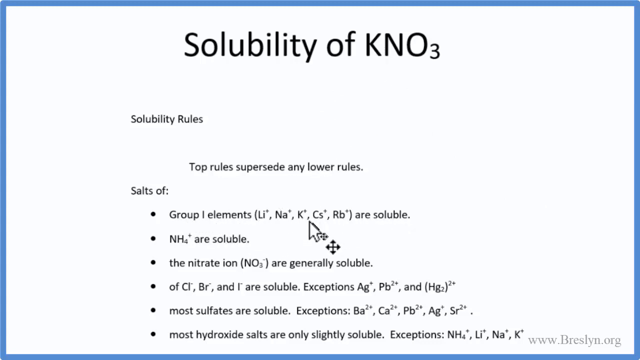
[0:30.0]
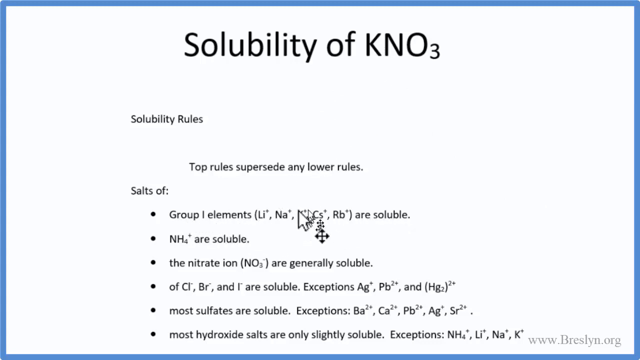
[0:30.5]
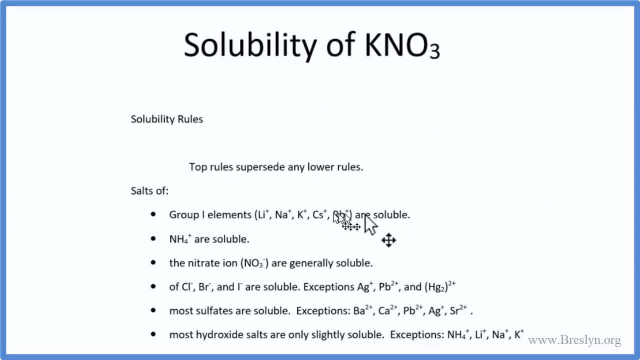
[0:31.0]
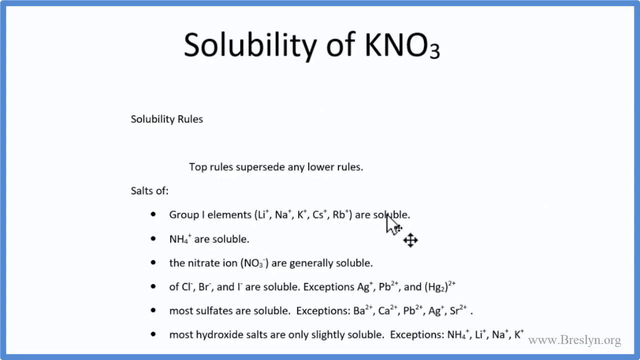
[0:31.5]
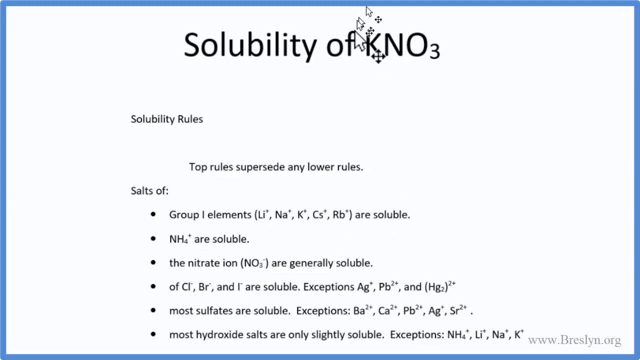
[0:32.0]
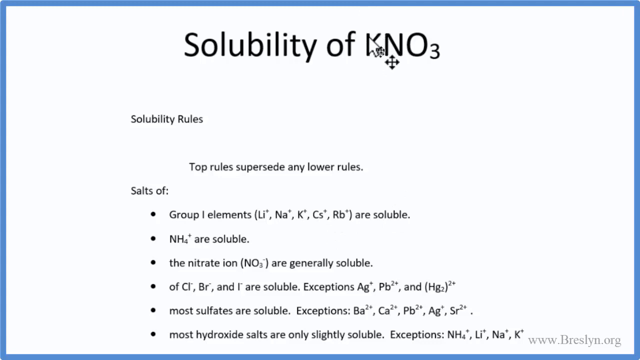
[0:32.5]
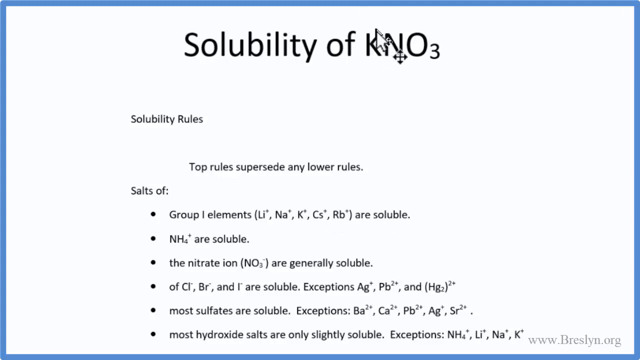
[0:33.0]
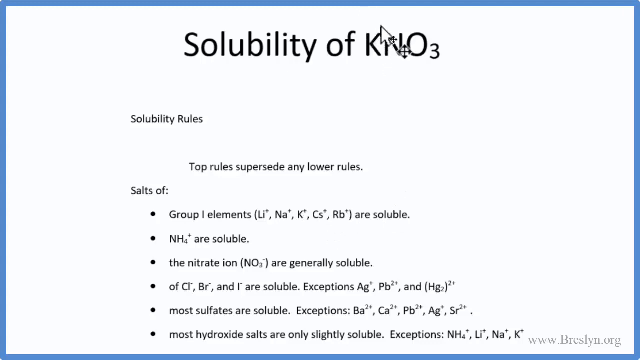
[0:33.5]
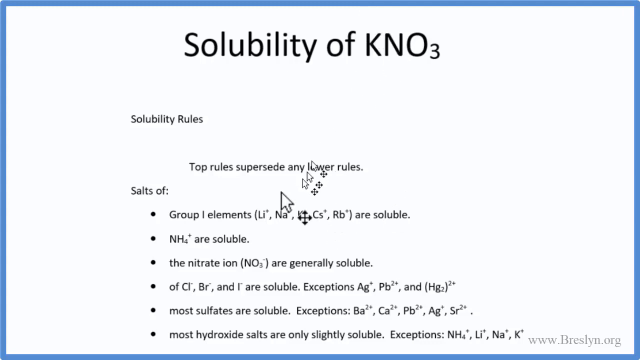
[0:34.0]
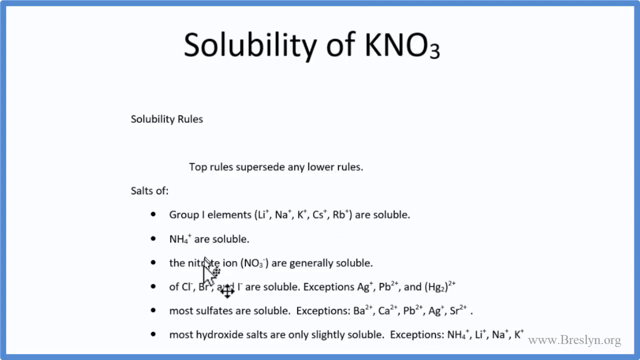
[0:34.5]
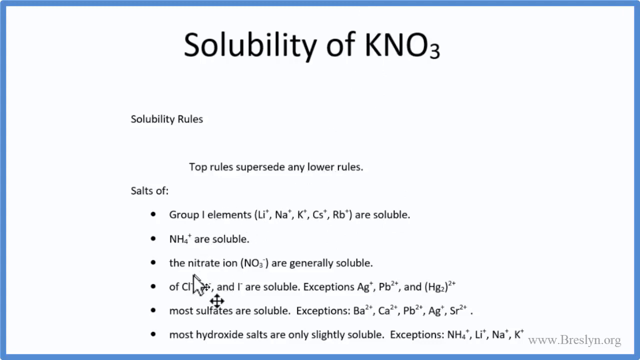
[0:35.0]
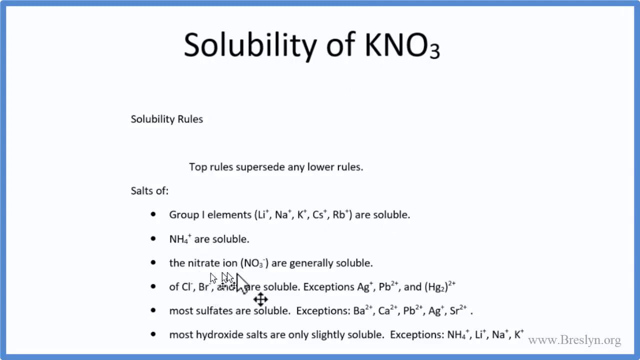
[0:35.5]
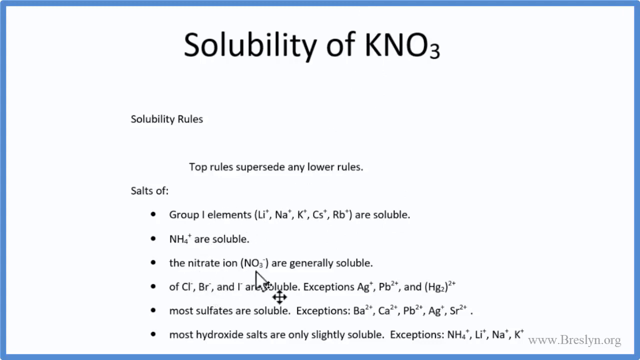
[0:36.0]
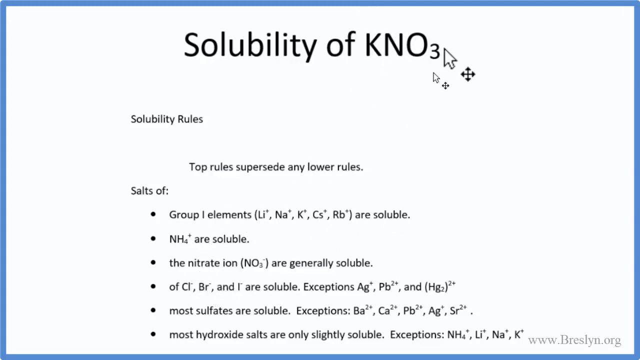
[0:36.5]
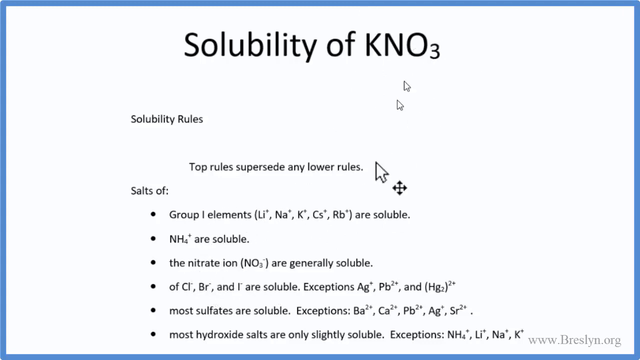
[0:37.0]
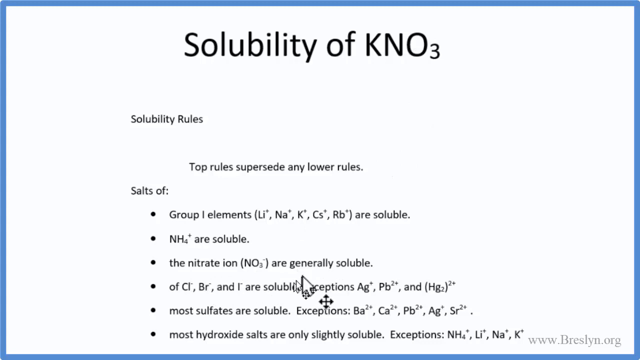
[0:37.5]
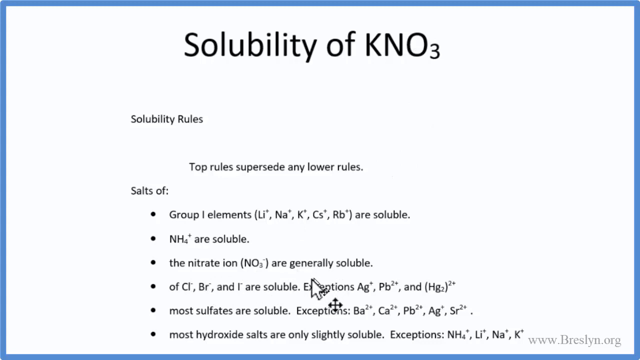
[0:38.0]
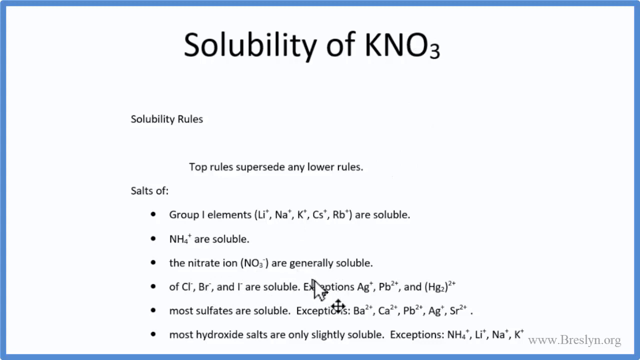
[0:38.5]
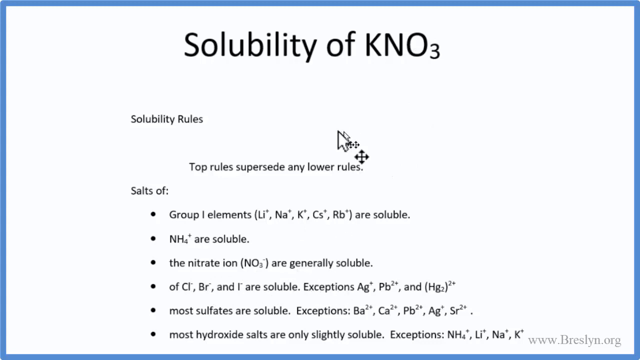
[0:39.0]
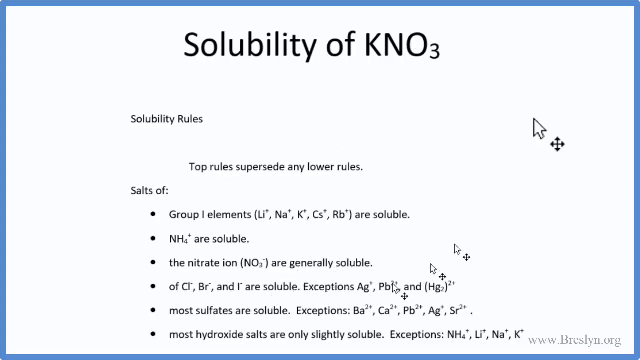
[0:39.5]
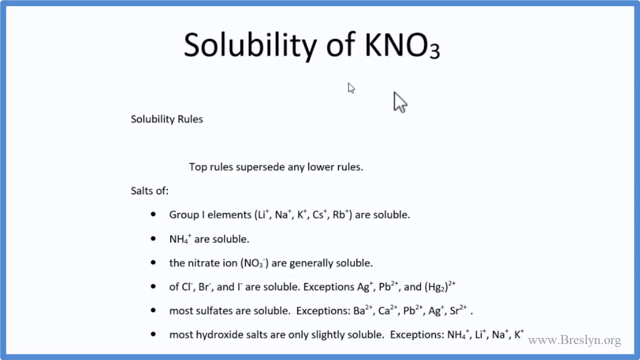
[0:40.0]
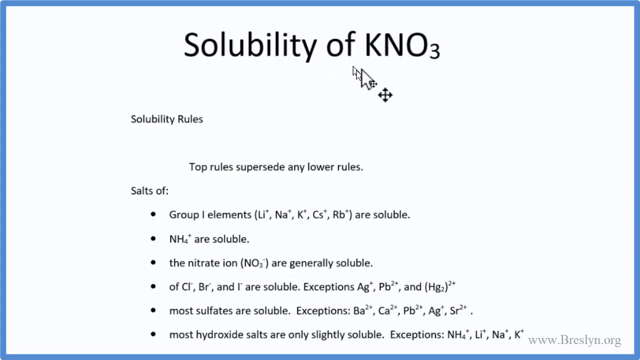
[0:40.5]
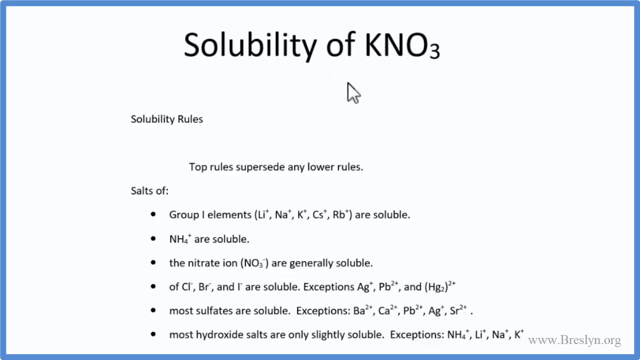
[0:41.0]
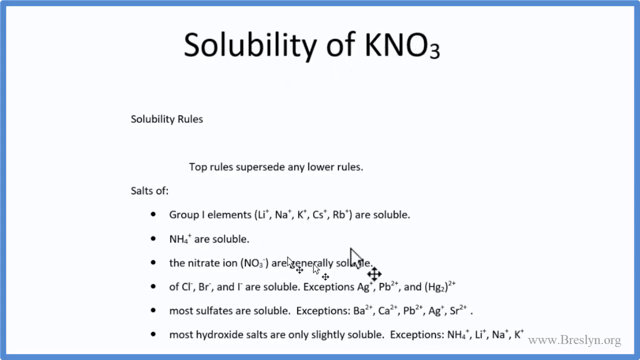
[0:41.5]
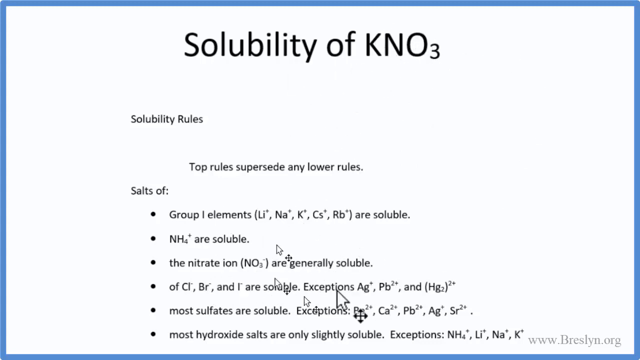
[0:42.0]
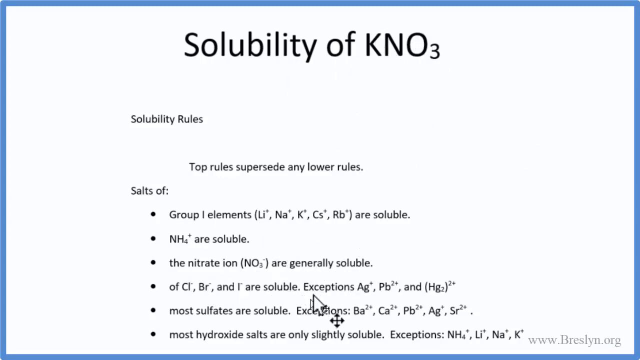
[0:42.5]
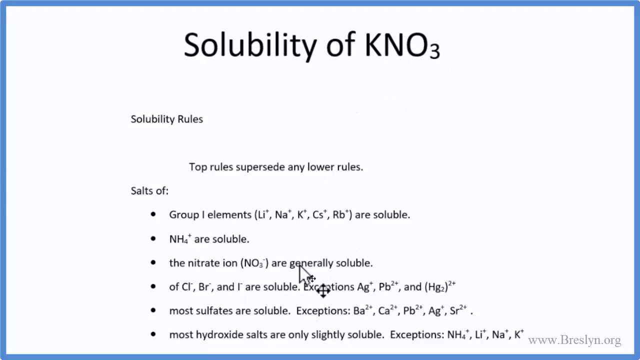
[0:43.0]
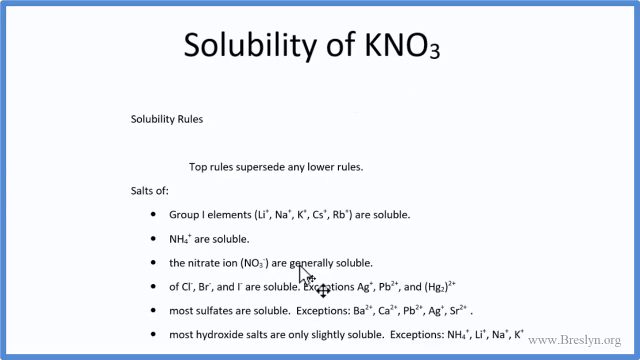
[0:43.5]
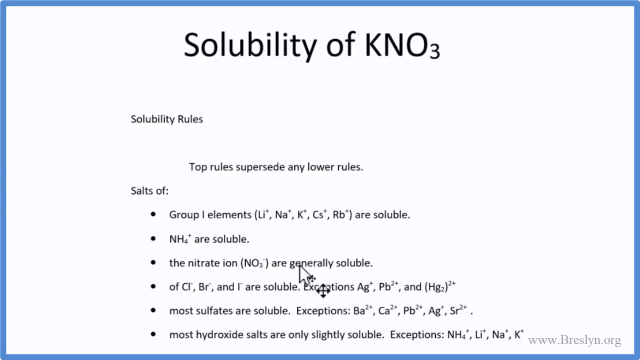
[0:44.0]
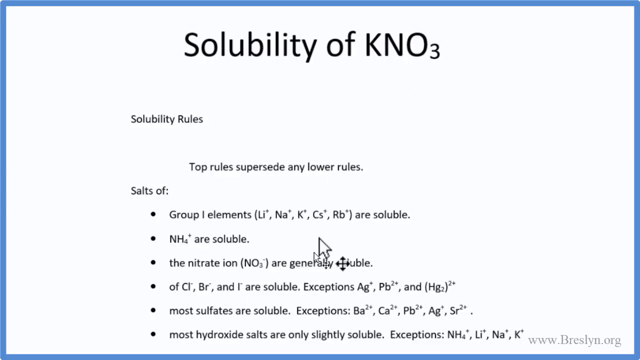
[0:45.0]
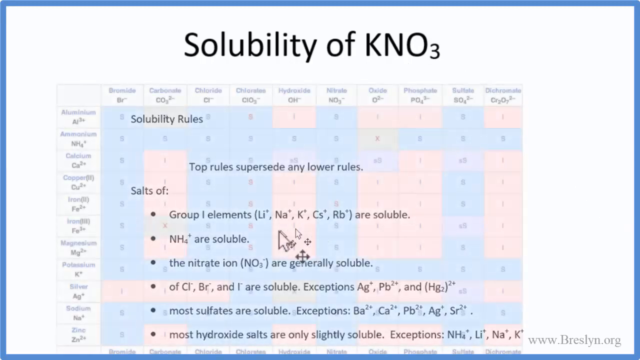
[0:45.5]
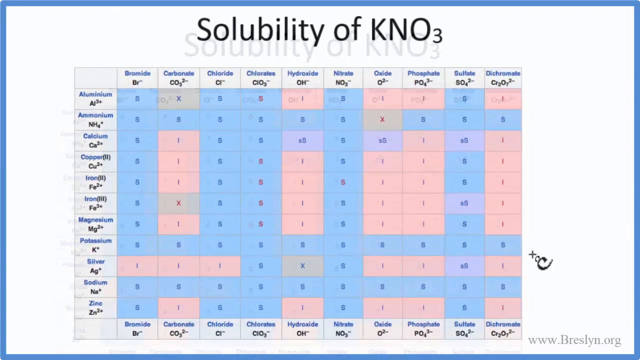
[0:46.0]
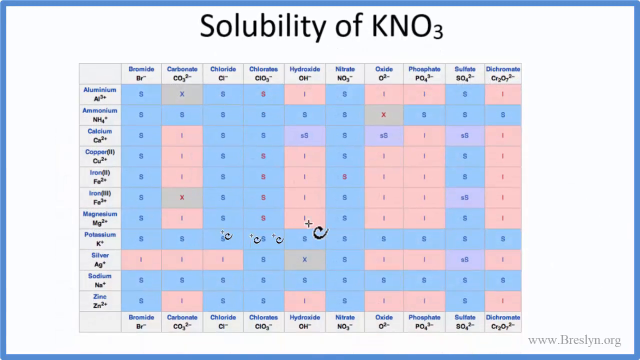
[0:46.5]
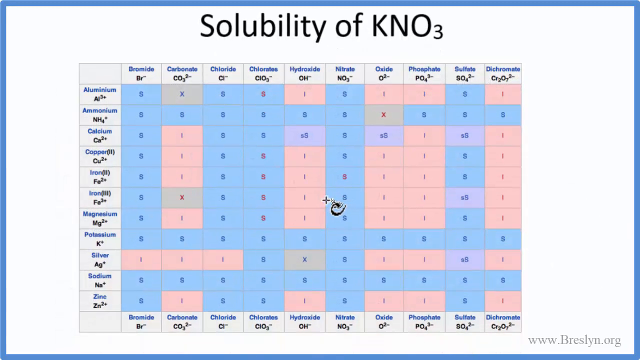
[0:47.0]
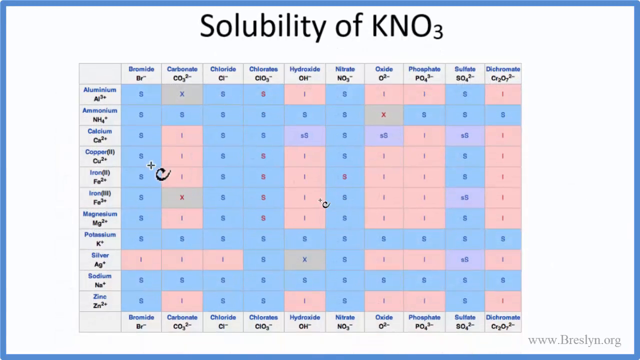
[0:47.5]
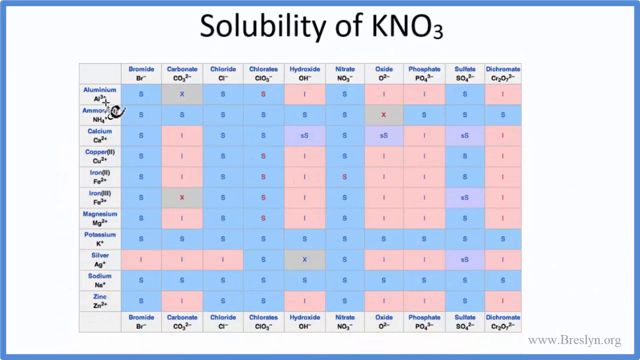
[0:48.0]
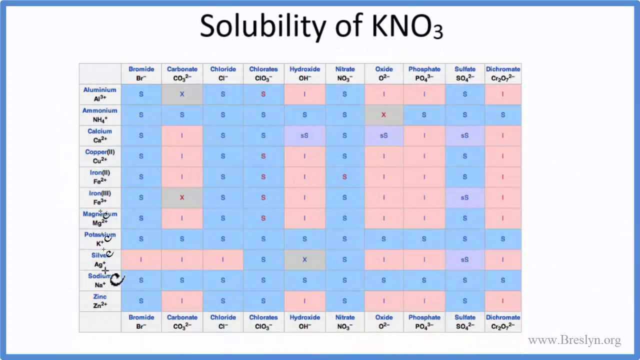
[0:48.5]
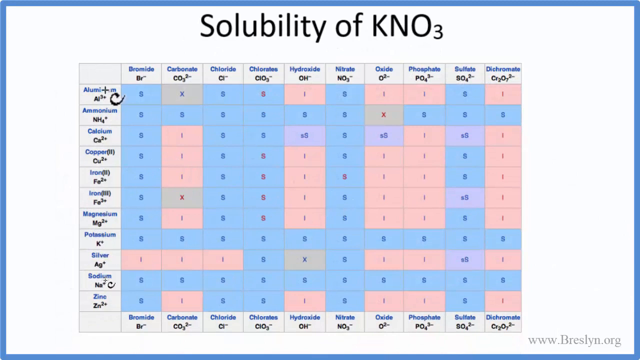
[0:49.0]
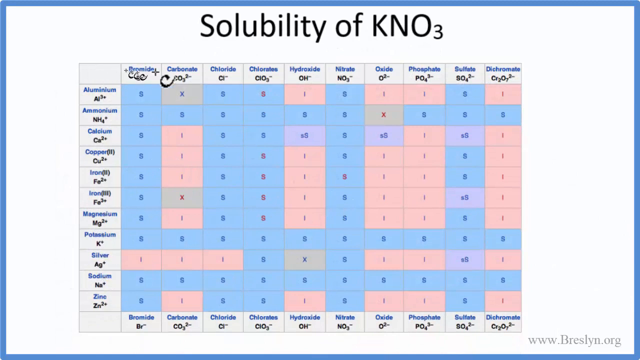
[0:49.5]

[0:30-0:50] The background is white and black. The title "solubility of KNO3" is shown in a bigger font. Below it are "solubility rules" and "top rules supersede lower rules," then "salts of" with bullet points: group one elements L-I, N-A, K, C-S, R-B are soluble; NH4 are soluble; Cl, Br and I are soluble, with exceptions Ag, Pb and Hg2. Some of the words appear to get circled. A chart then comes up with the title "solubility of KNO3."